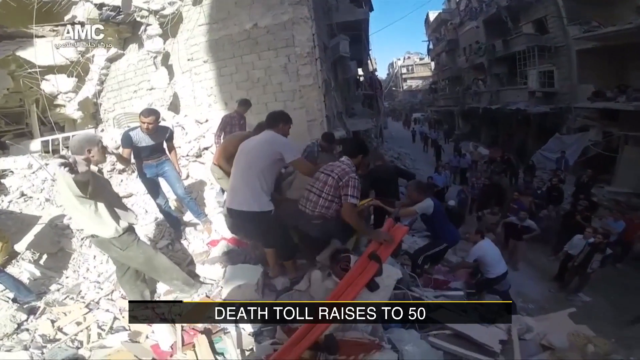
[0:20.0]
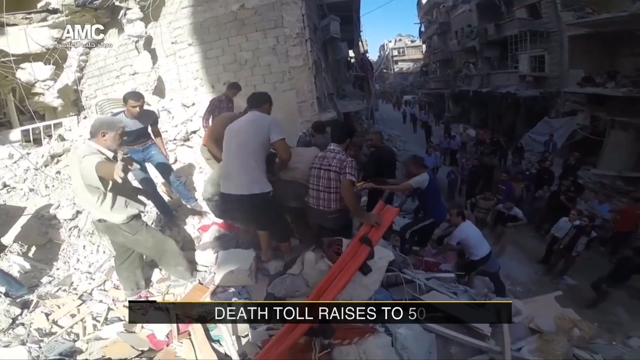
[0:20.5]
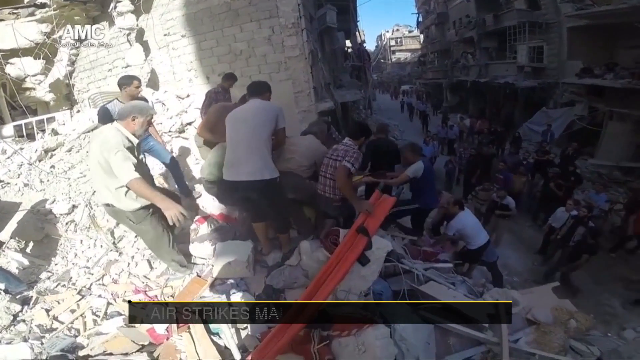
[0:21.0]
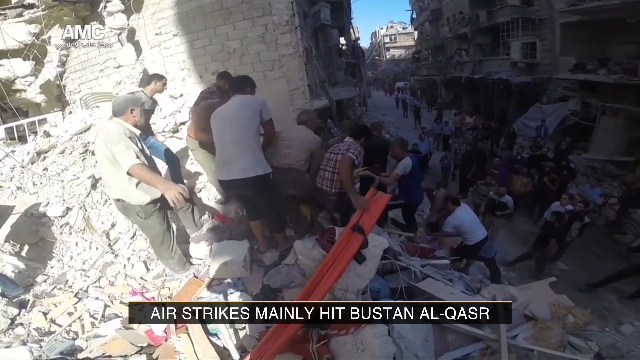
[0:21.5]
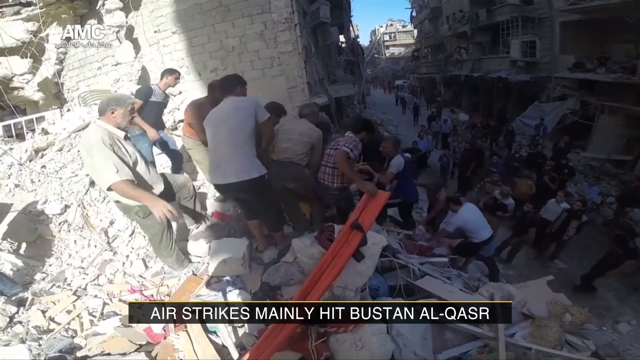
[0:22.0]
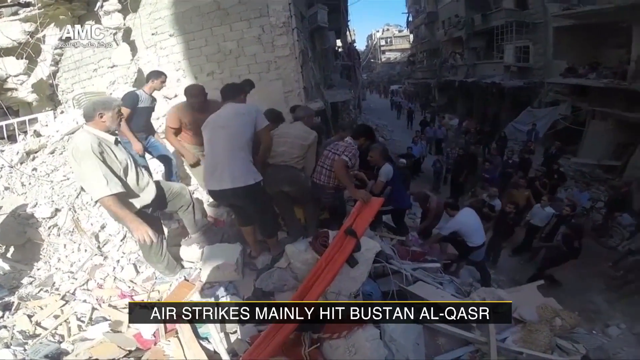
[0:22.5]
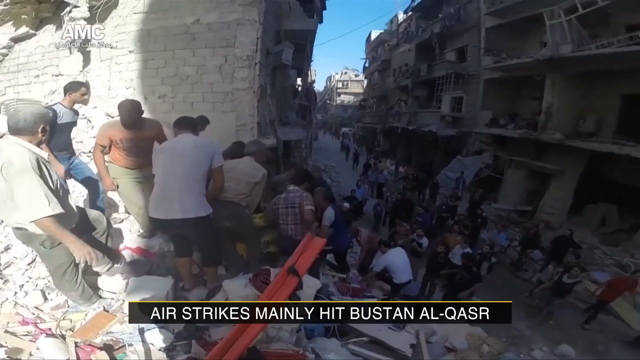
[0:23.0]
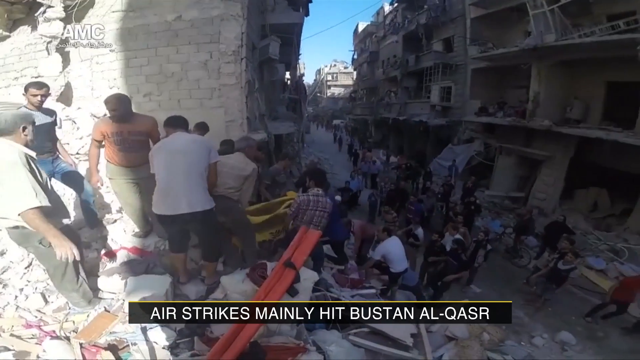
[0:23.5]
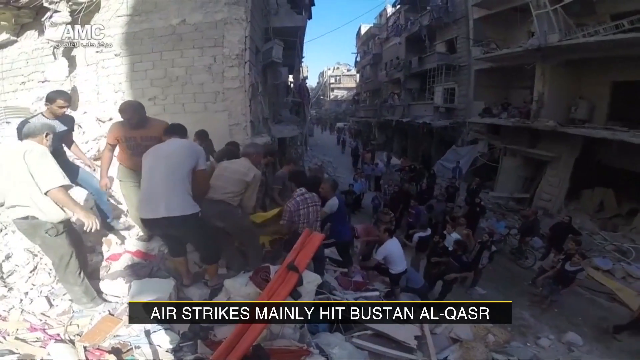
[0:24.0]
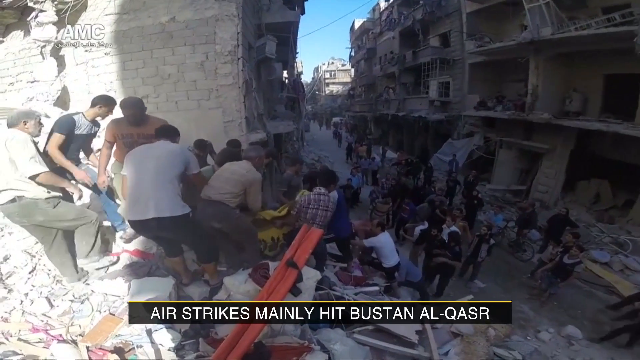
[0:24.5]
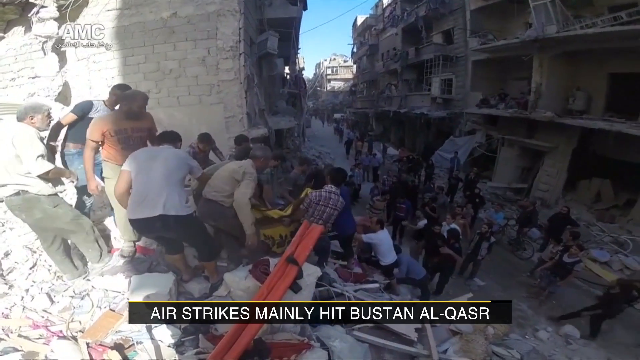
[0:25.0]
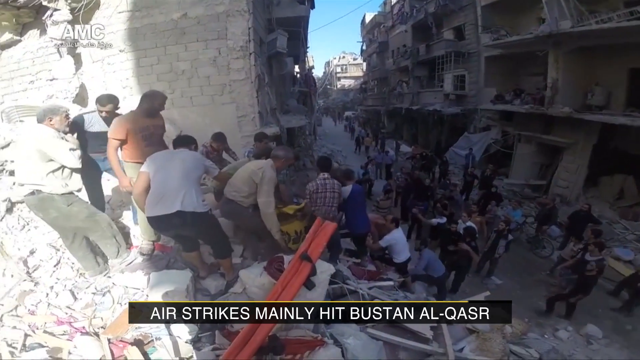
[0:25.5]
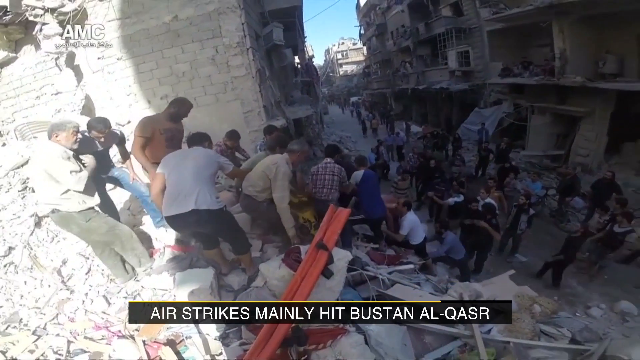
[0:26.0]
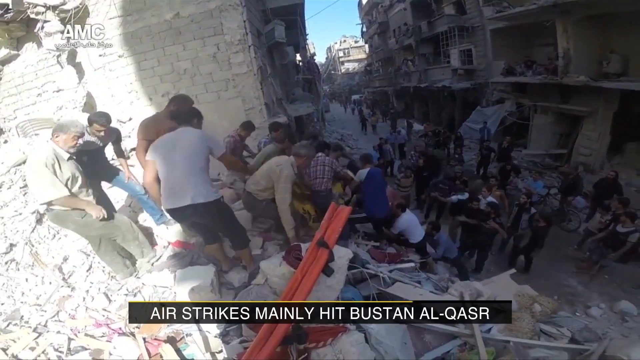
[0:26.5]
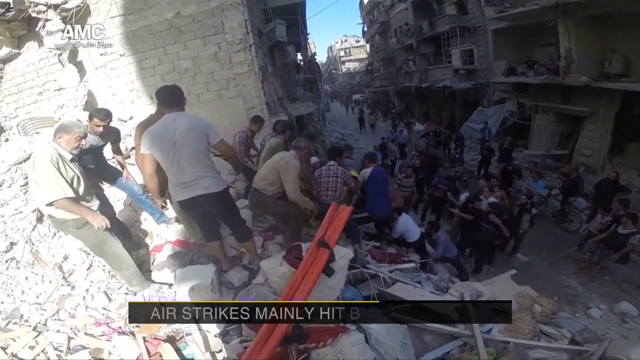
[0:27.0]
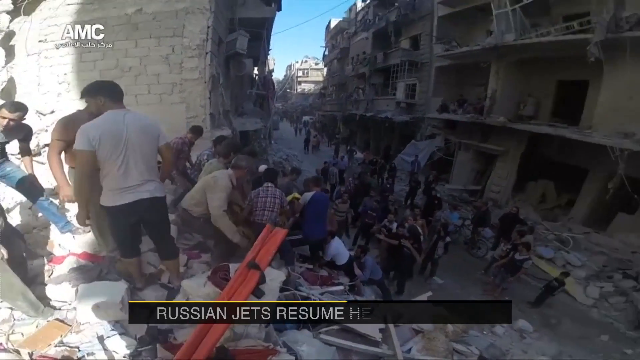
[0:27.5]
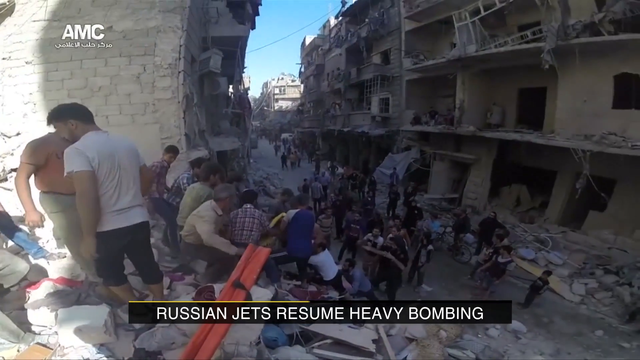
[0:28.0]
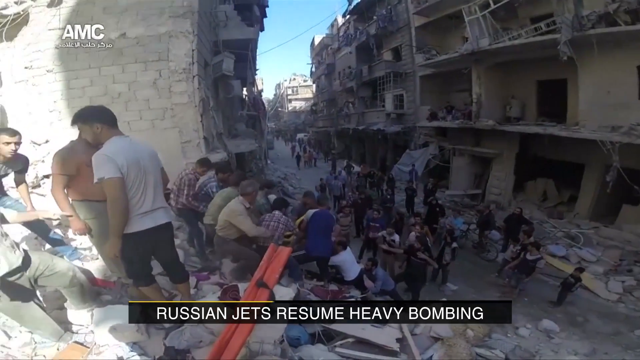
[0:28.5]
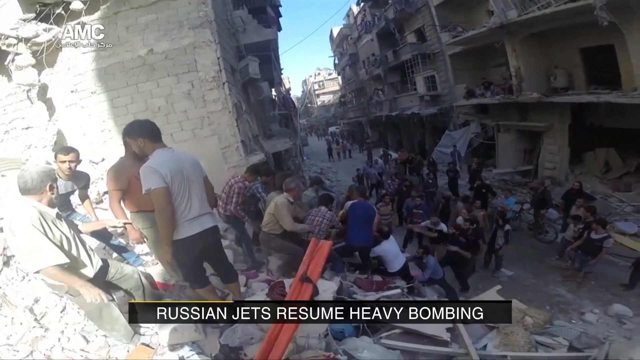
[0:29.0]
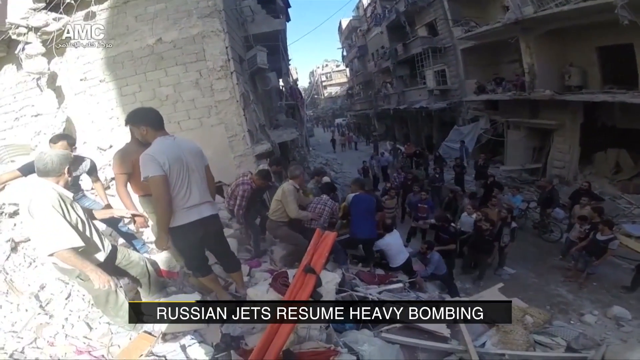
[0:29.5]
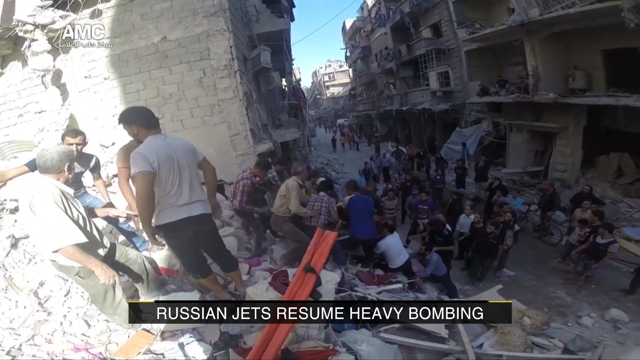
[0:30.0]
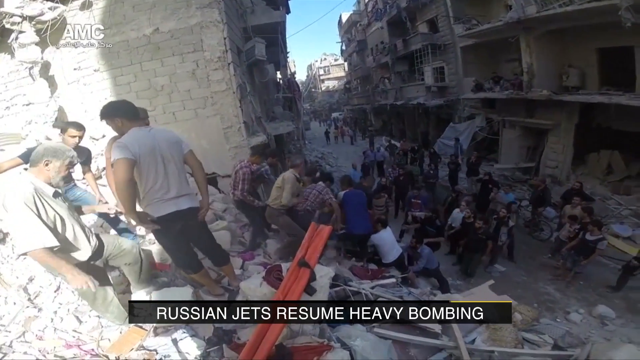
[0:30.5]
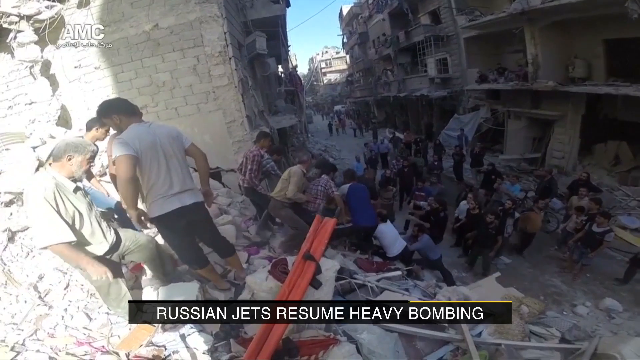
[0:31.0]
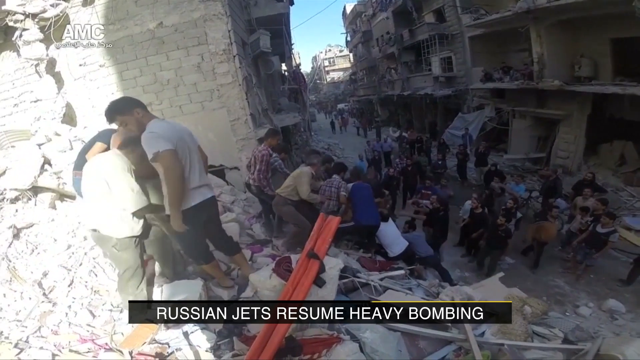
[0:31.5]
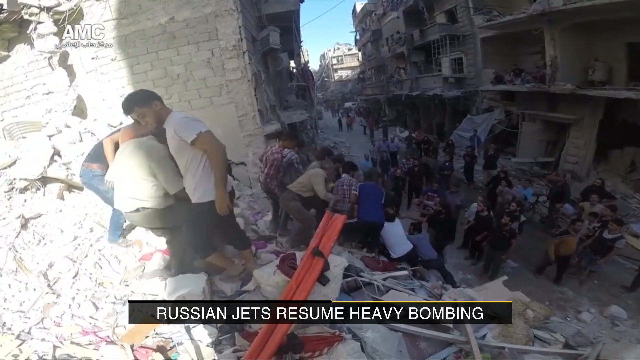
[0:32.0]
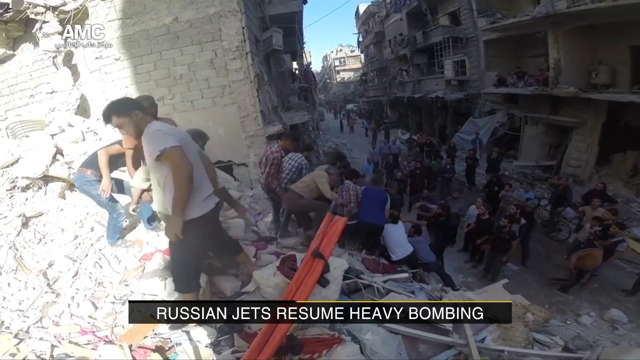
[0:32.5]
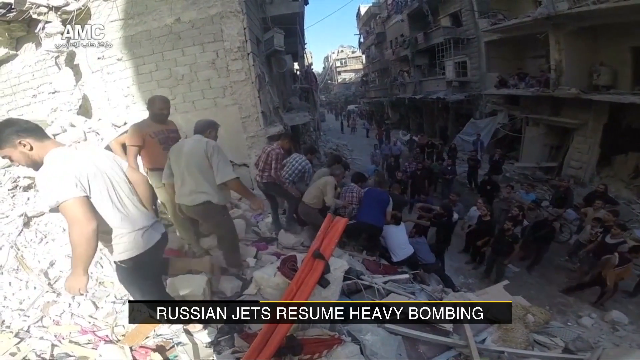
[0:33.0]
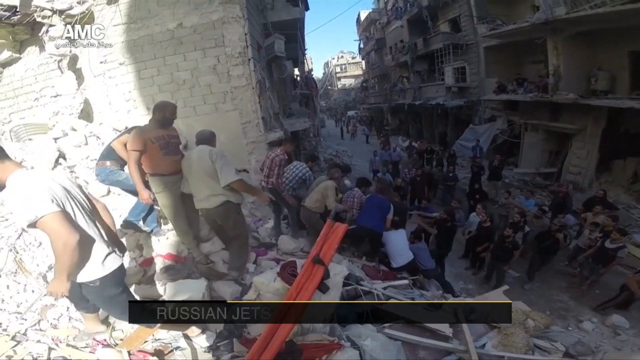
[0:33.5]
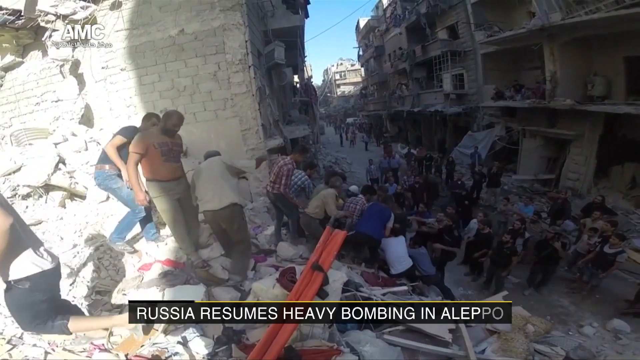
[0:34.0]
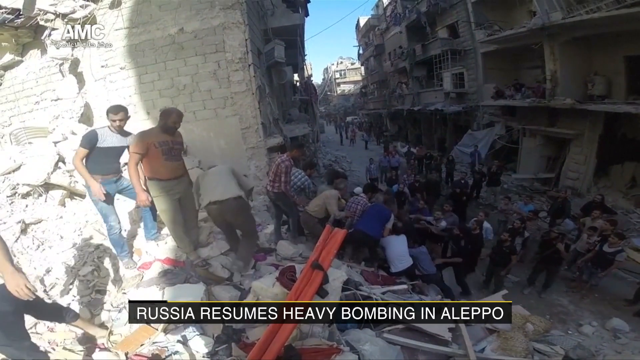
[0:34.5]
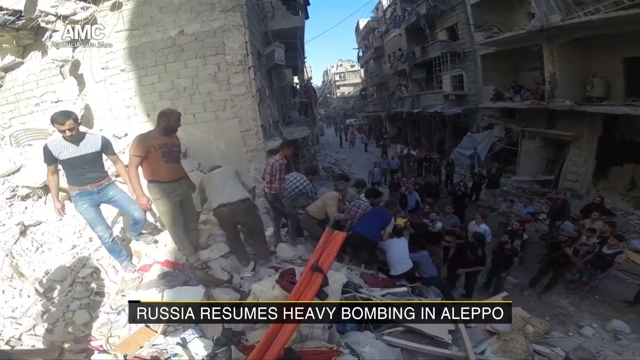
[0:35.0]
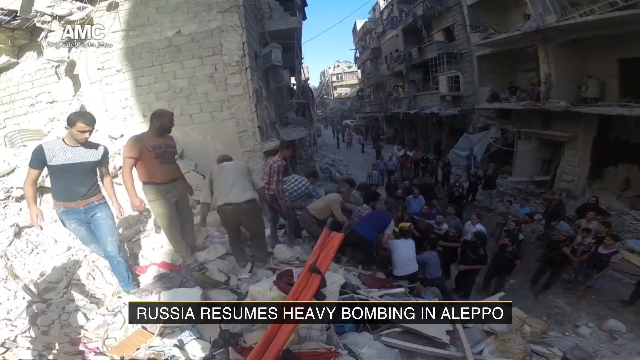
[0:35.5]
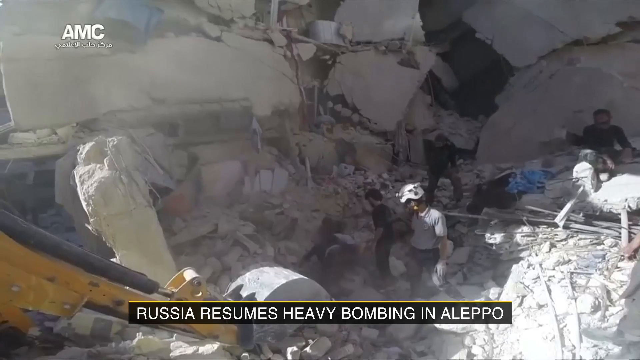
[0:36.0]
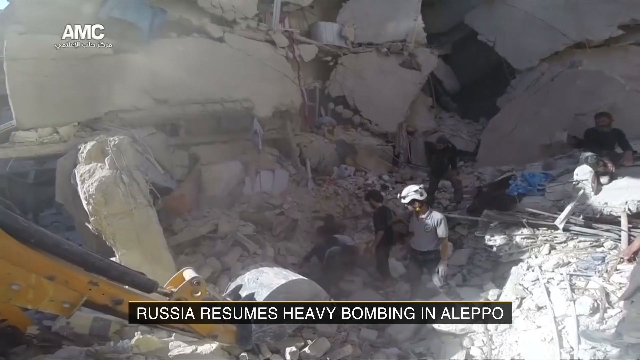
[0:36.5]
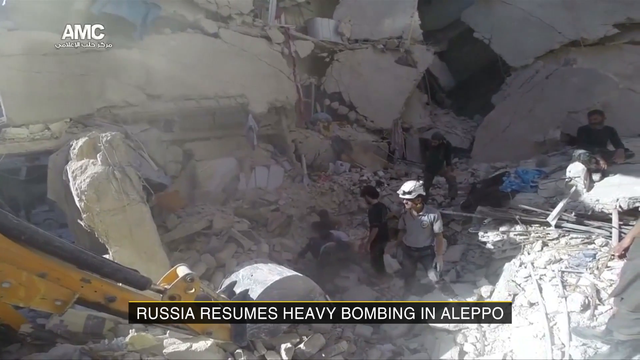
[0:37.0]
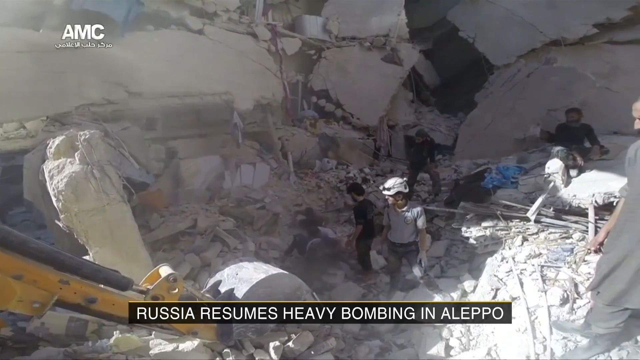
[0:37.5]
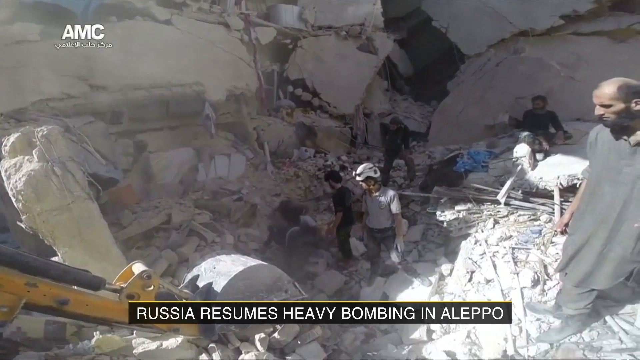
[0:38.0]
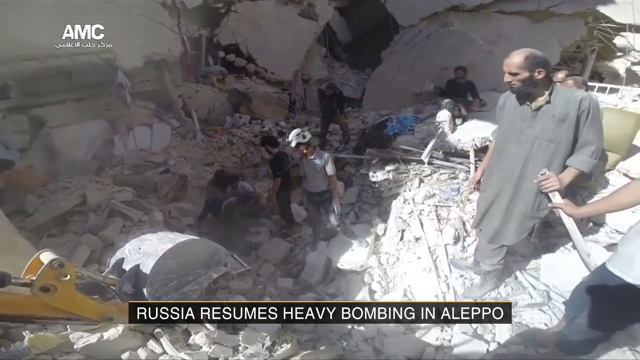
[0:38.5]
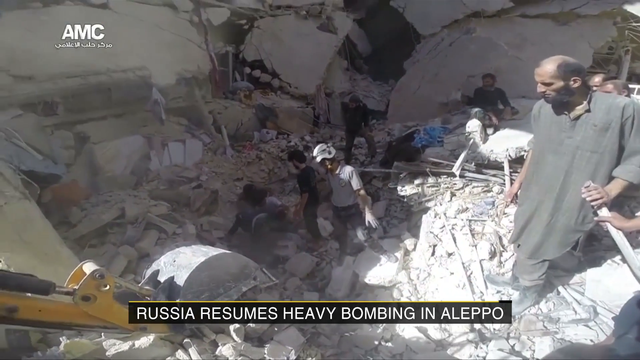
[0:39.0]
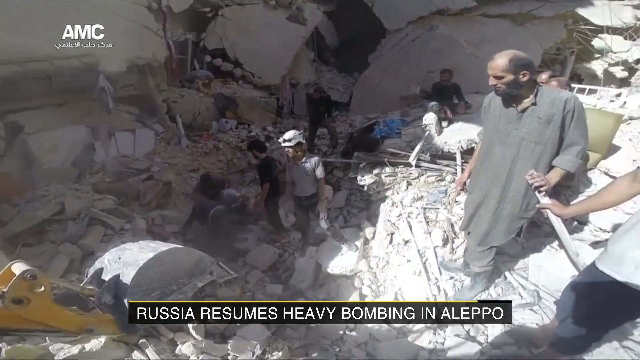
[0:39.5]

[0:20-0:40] In a wide-format shot, a group of people is gathered on a hill of rubble on the lower left side of the frame, mostly facing toward the upper right and looking down. A man in a plaid shirt at the front reaches out with his left hand and grabs the hand of another man just down and to the right of him, seemingly helping him up the hill. Another man further down and to the right, in a white t-shirt, appears to be climbing the hill as well. Below, there appears to be a street filled with many other people, with dilapidated buildings on both sides. The man in the plaid shirt does help the other man up the hill, and the other people on top of the hill appear to be helping others in the background as well. The video appears to be a news broadcast: a black banner runs left to right along the bottom with white capital letters reading "Russia resumes heavy bombing in Aleppo."